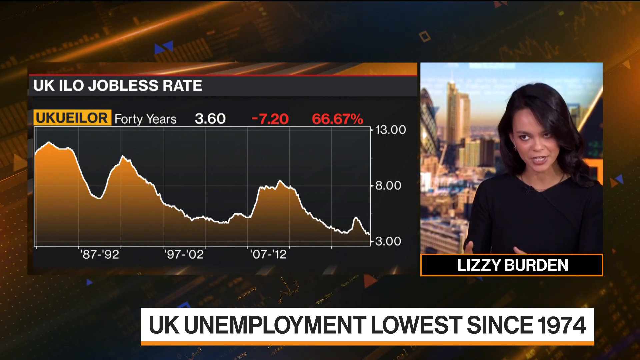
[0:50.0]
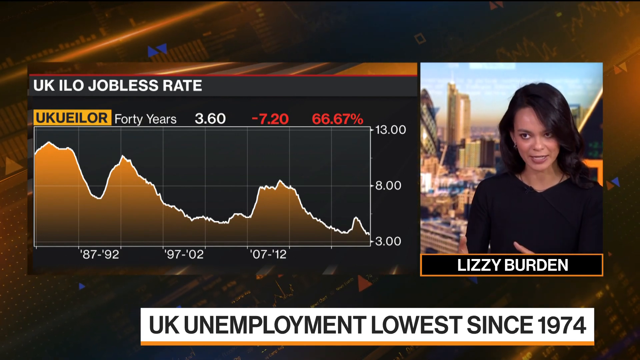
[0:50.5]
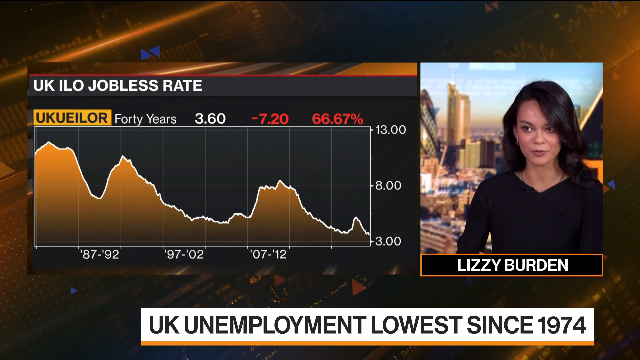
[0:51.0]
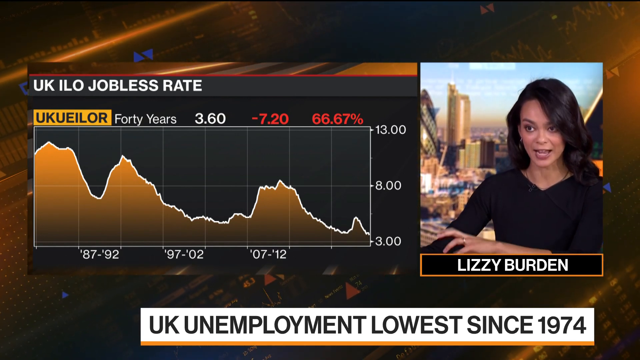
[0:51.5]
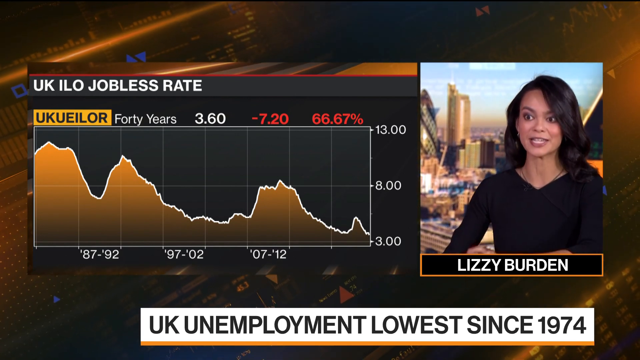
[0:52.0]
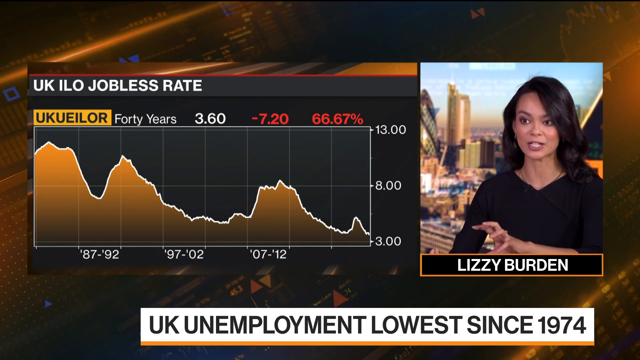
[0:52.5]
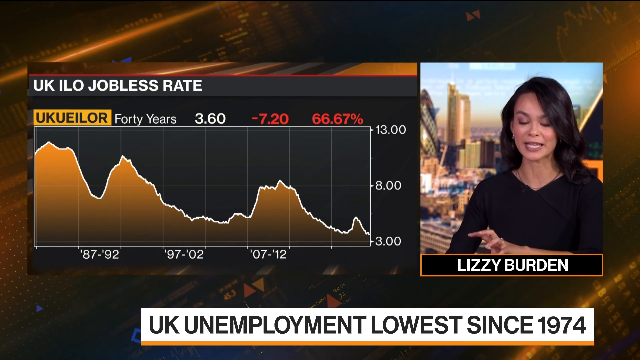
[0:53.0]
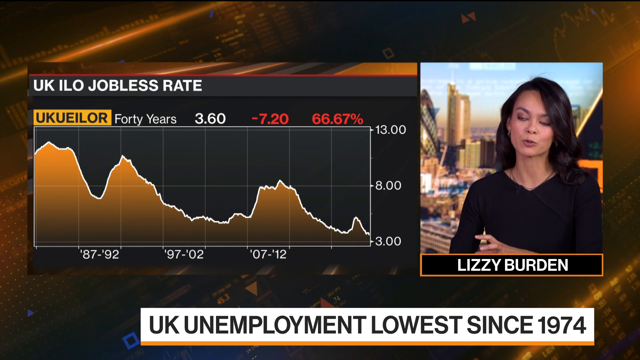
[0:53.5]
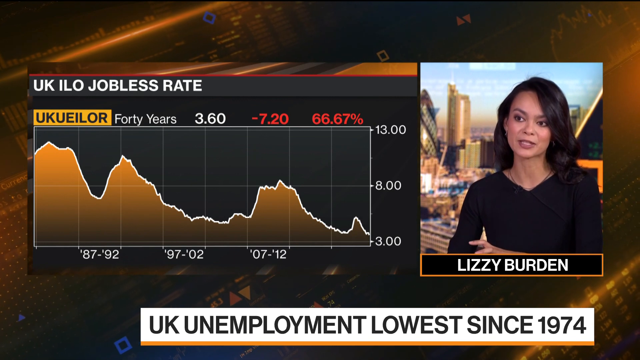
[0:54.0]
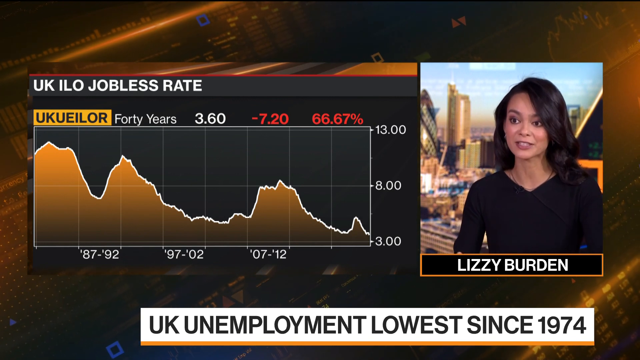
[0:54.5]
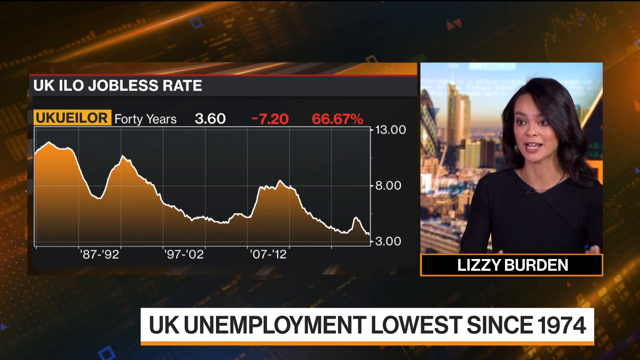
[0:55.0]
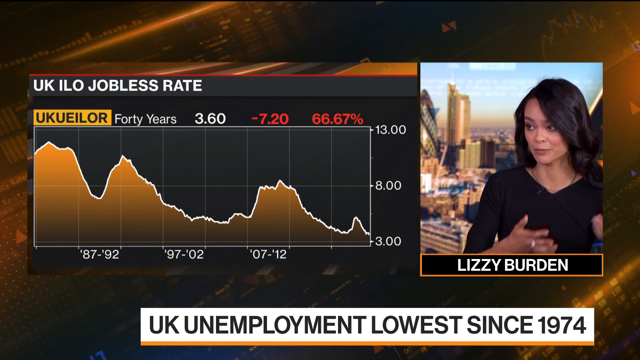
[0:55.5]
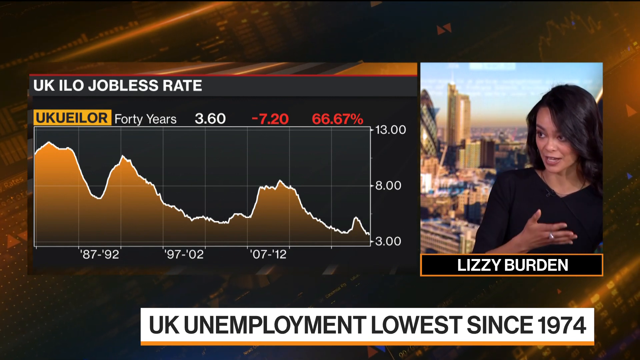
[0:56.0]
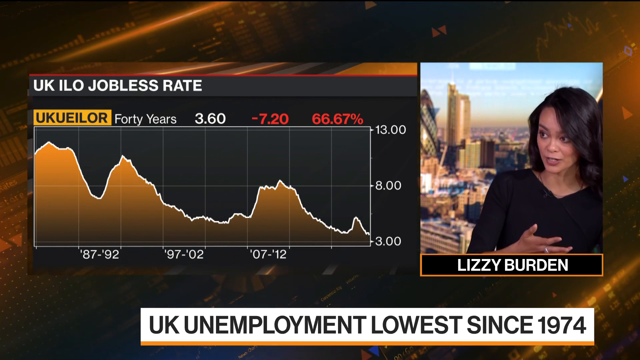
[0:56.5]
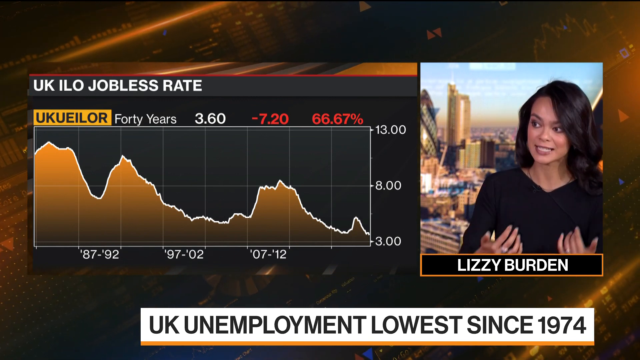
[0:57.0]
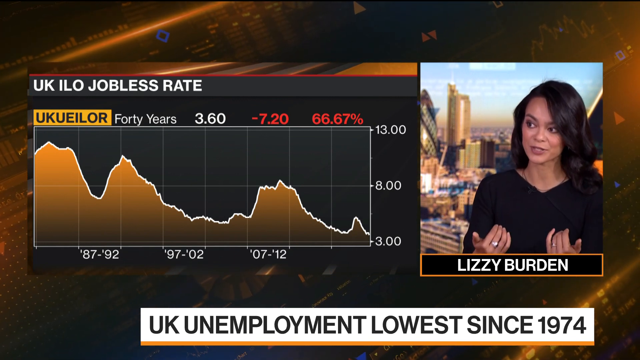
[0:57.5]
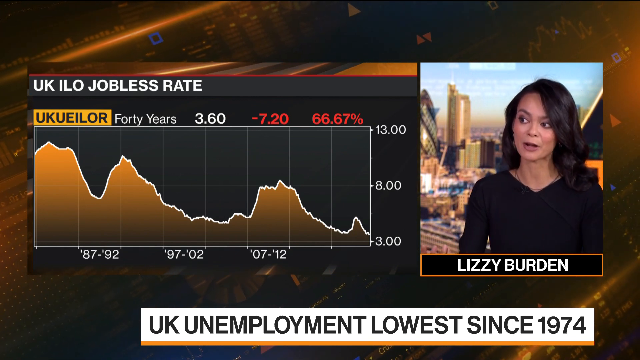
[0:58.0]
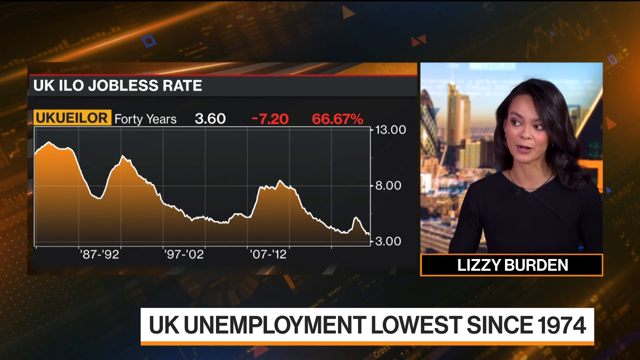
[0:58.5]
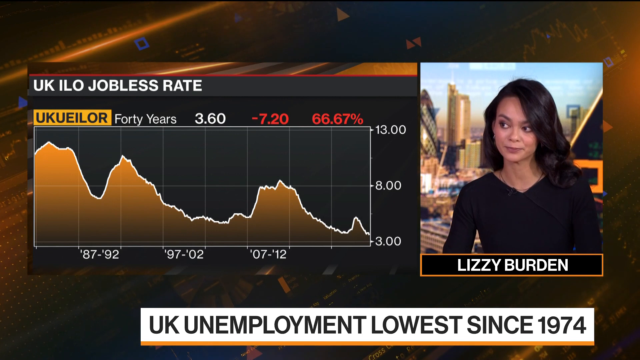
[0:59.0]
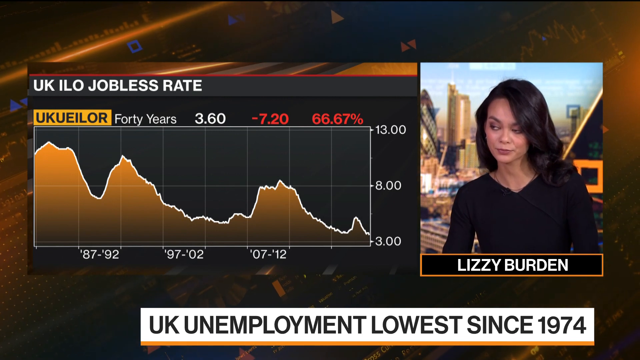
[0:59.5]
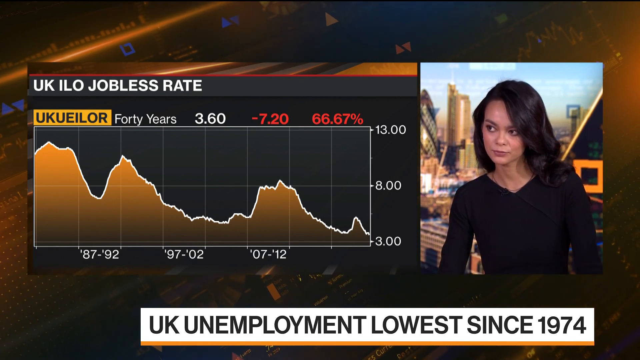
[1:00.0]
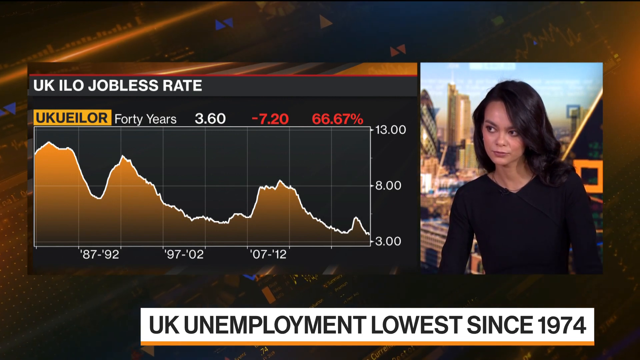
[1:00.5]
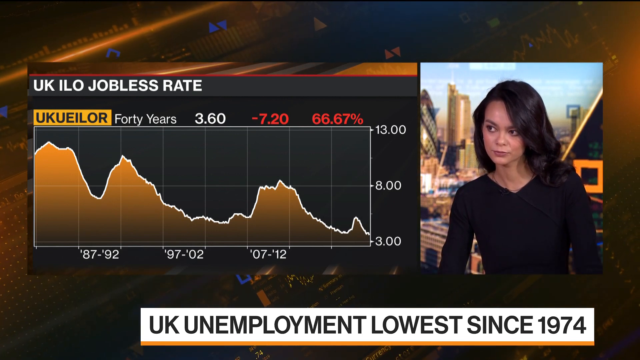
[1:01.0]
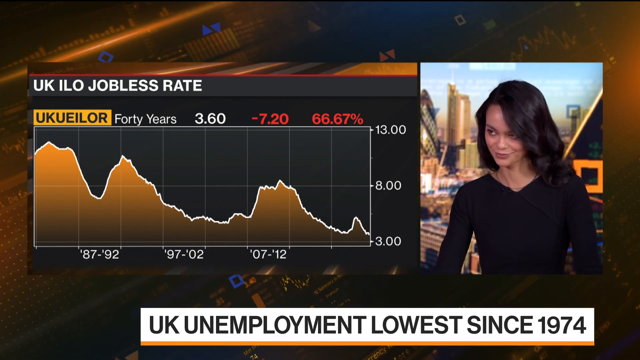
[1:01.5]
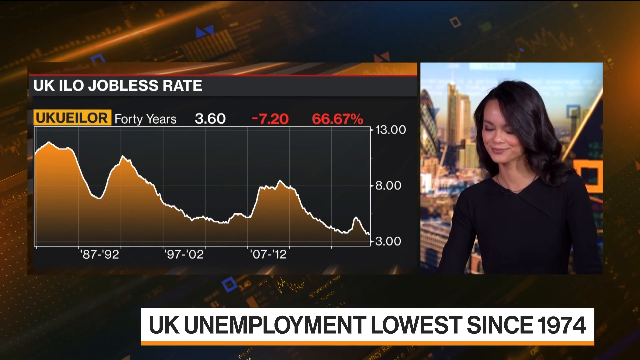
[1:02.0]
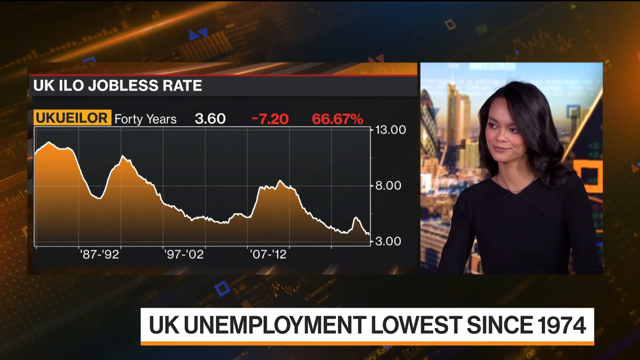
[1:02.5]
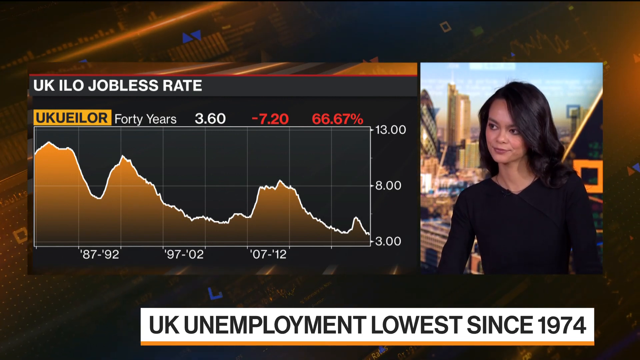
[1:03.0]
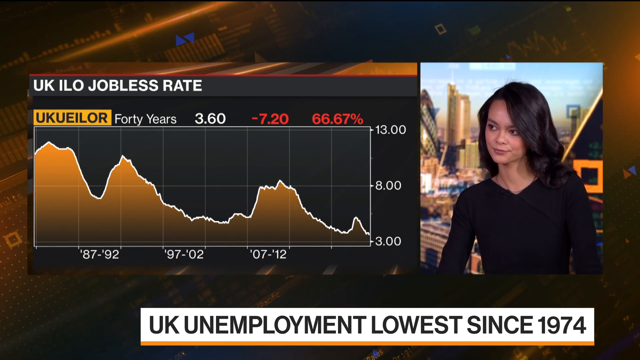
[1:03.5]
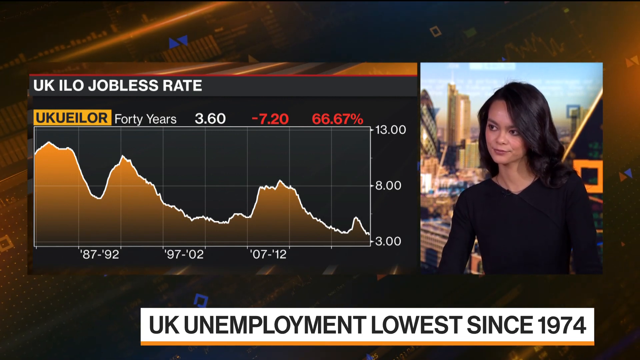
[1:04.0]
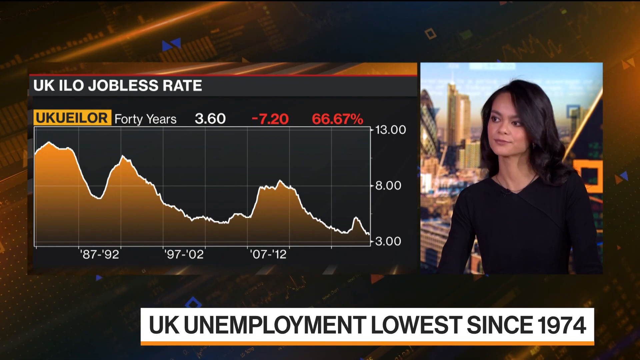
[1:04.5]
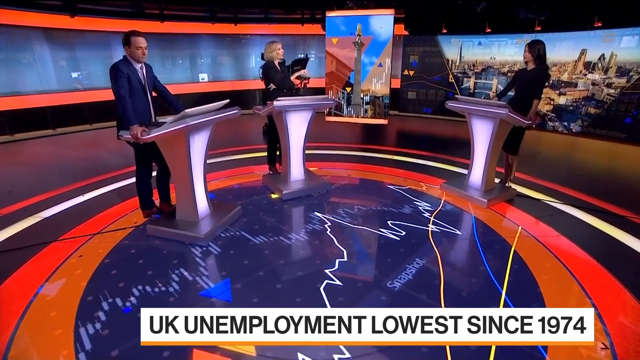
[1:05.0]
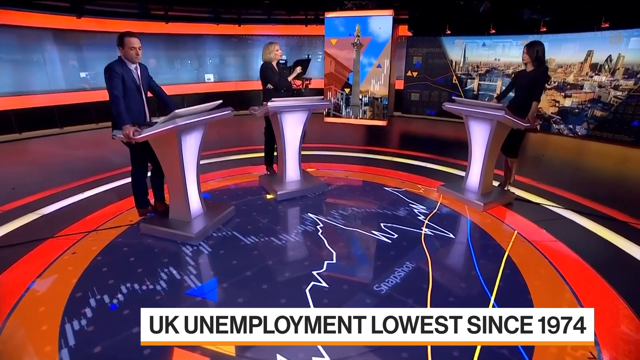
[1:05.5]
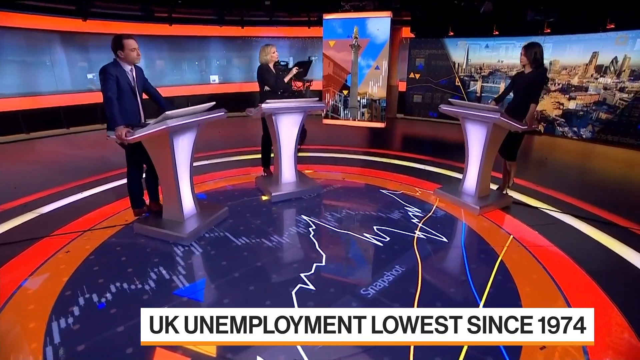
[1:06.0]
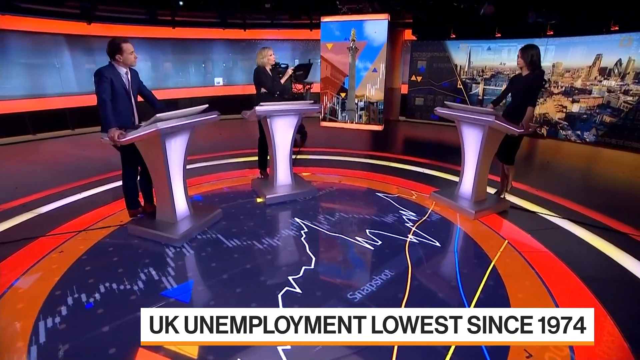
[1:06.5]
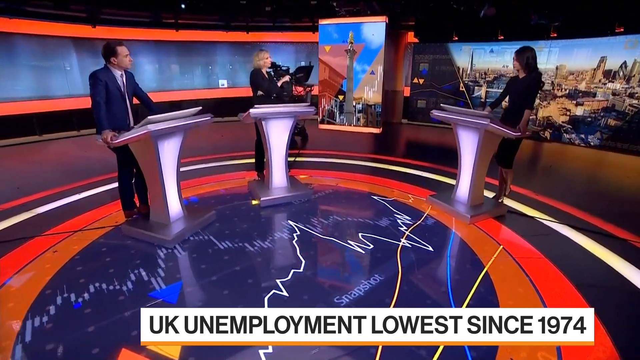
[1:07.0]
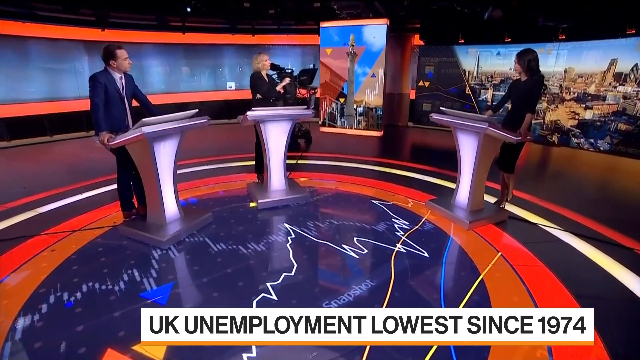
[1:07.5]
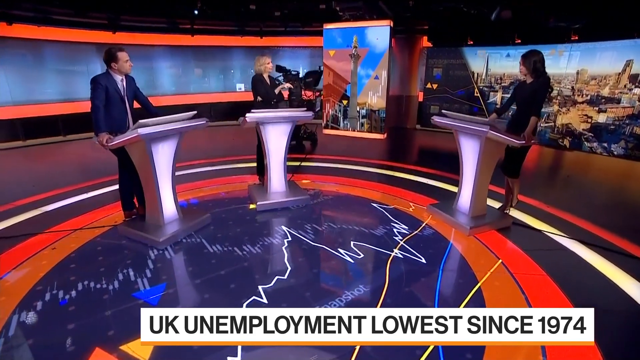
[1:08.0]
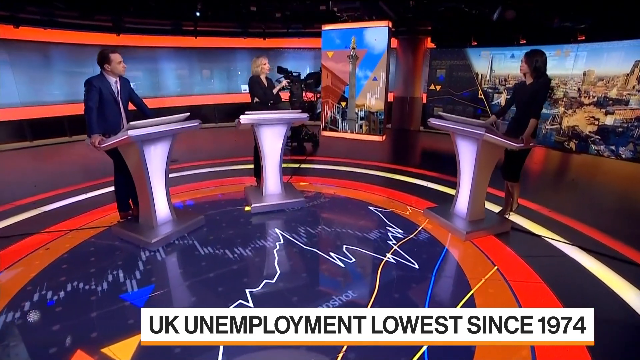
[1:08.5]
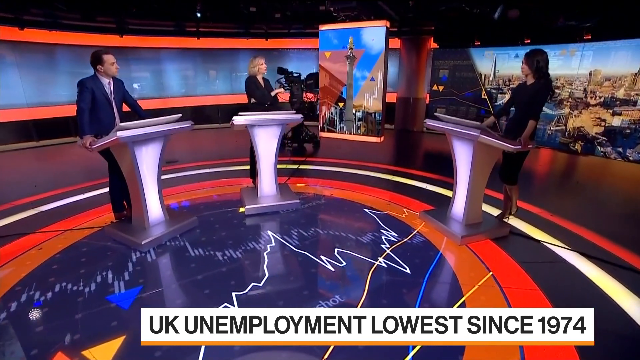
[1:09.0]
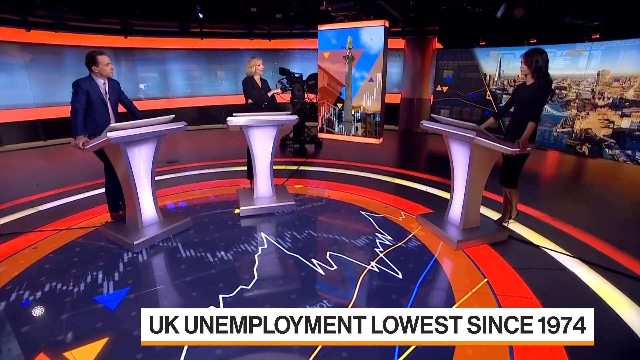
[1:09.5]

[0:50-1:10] The same woman continues talking, her video in a small box next to the ILO rate chart, as she engages with someone off screen. She nods along, apparently being asked a question, and the camera pans out to show two other people standing with her, each at a small individual podium desk, having a conversation. The studio has screens going around the back in a circular fashion, and the floor is lit up with many different things: numbers, graphs, and an aerial image of a city, probably New York City.